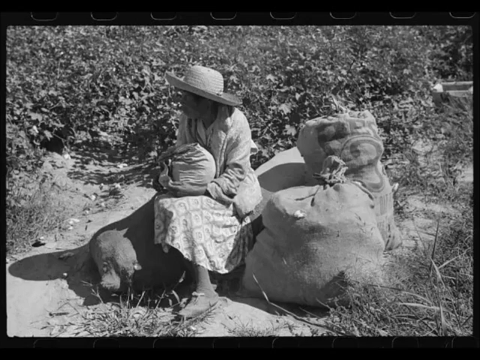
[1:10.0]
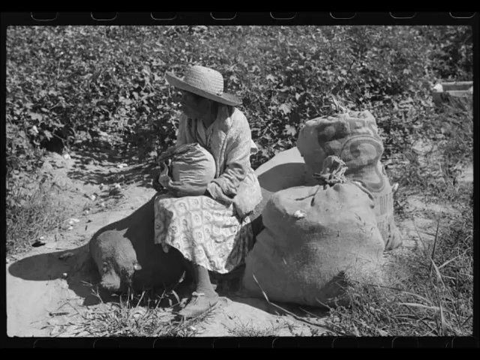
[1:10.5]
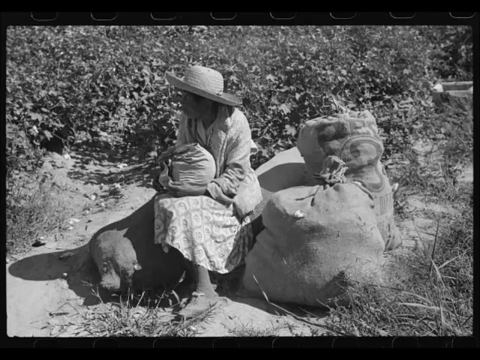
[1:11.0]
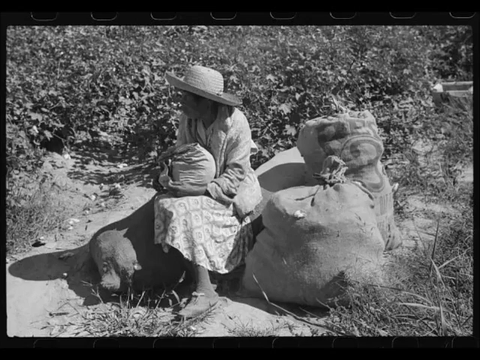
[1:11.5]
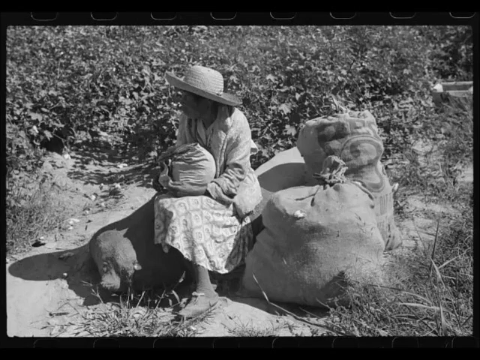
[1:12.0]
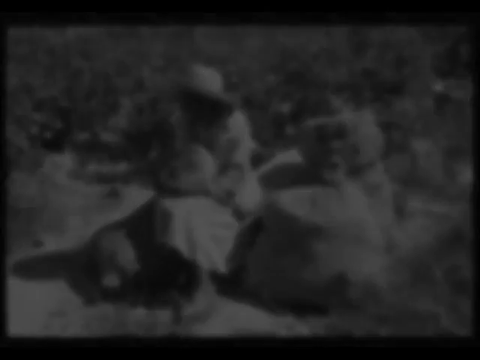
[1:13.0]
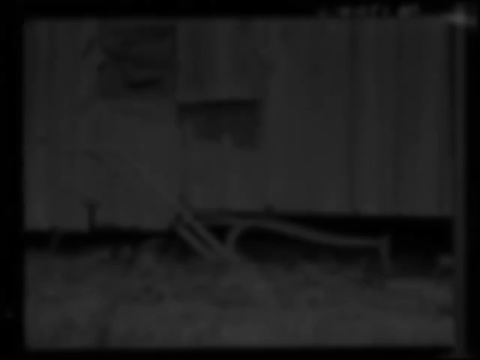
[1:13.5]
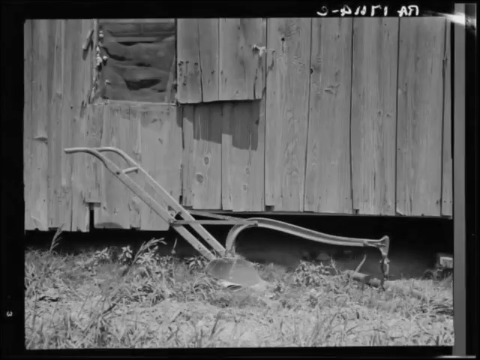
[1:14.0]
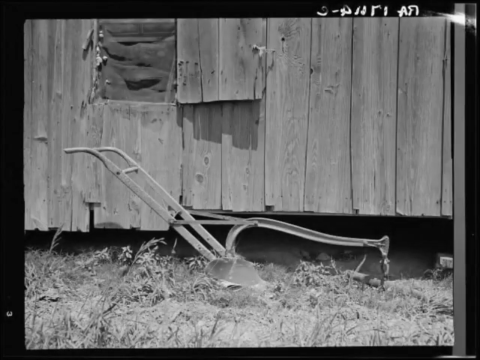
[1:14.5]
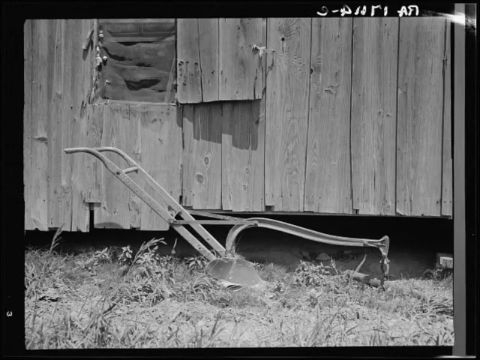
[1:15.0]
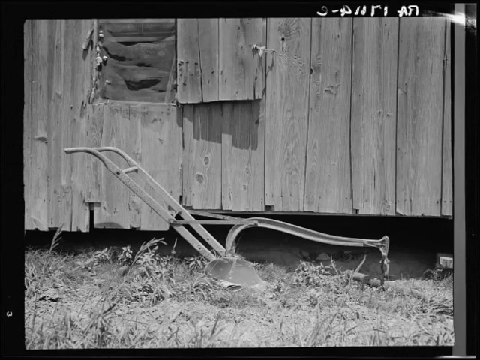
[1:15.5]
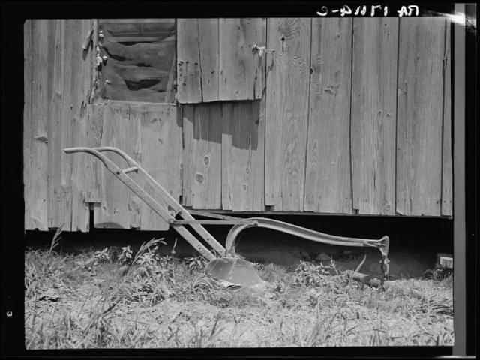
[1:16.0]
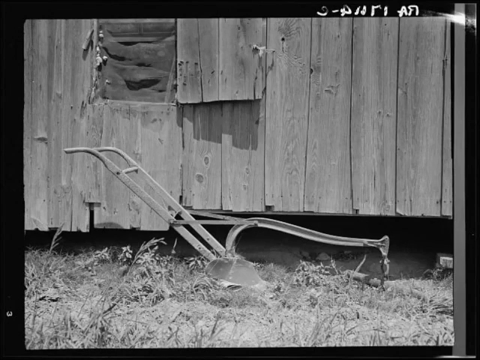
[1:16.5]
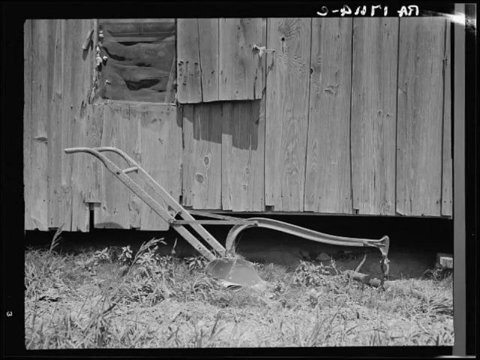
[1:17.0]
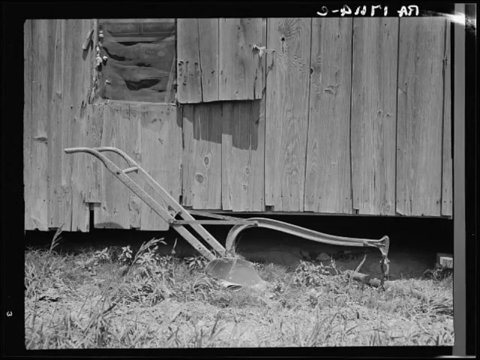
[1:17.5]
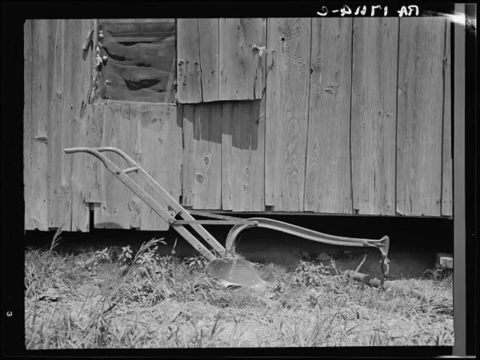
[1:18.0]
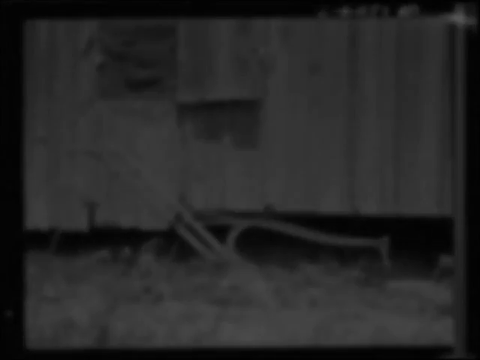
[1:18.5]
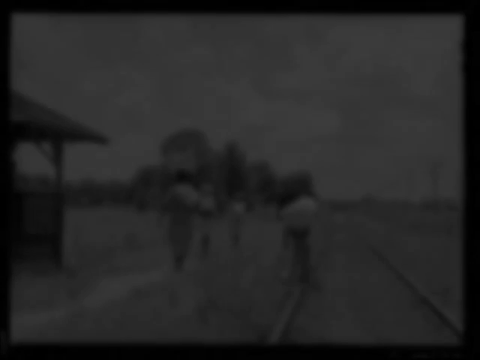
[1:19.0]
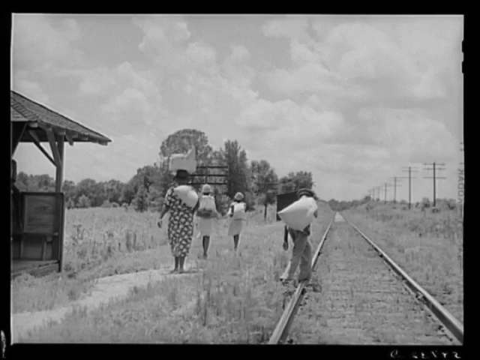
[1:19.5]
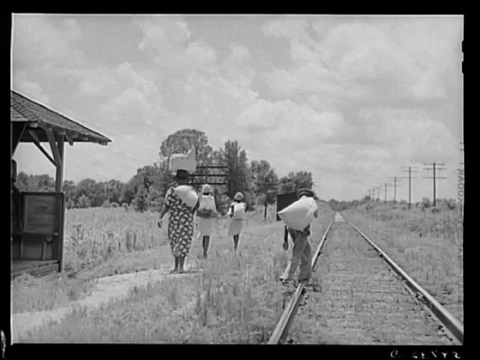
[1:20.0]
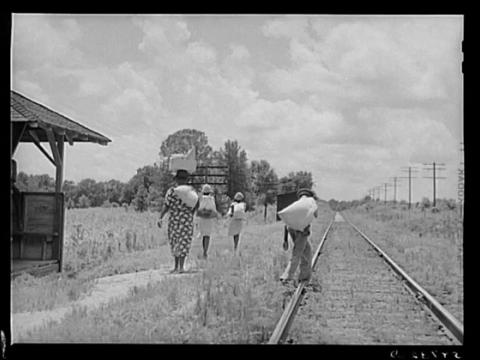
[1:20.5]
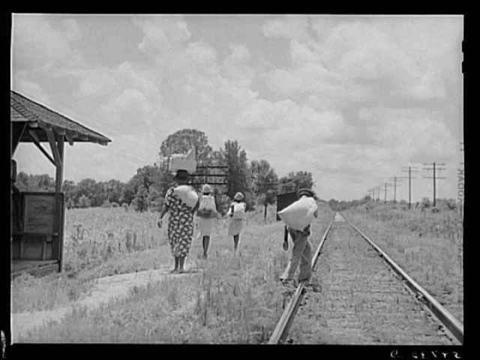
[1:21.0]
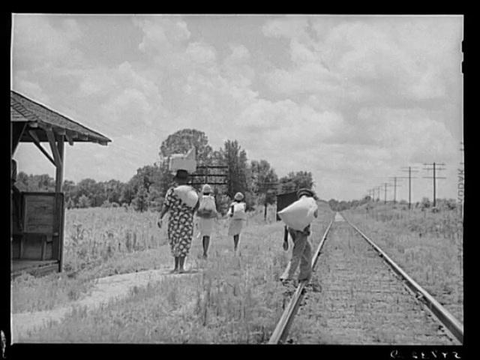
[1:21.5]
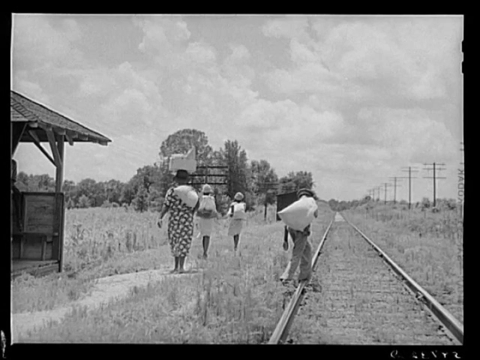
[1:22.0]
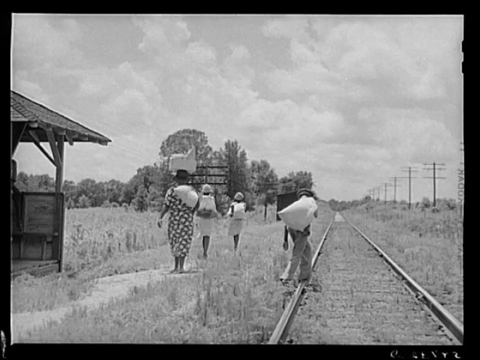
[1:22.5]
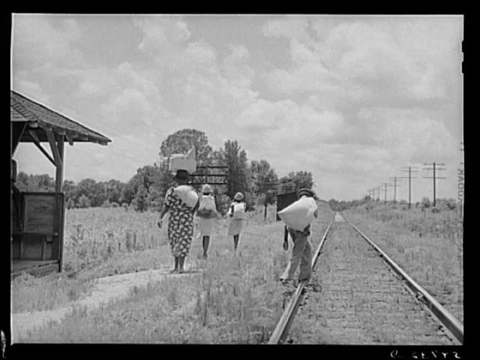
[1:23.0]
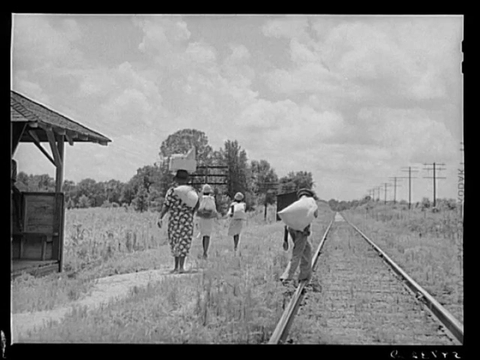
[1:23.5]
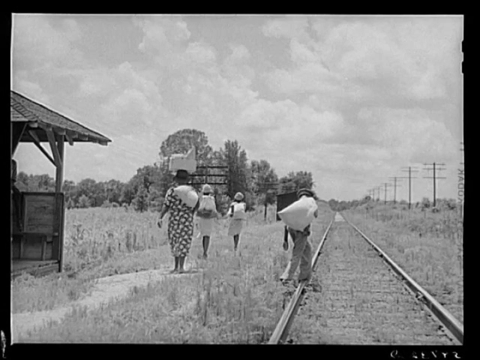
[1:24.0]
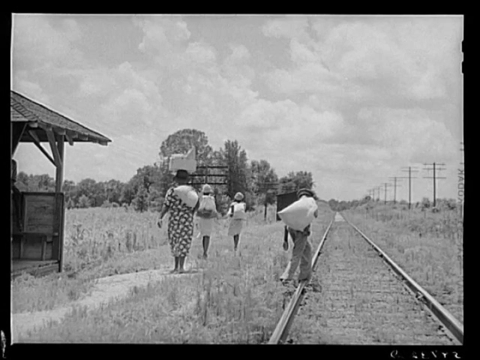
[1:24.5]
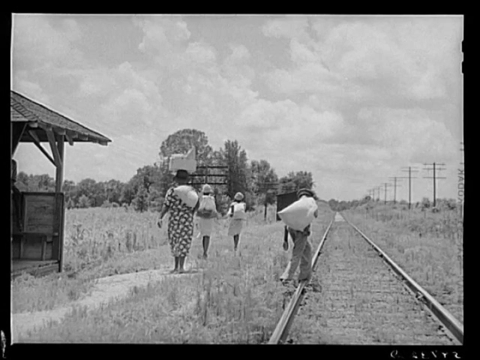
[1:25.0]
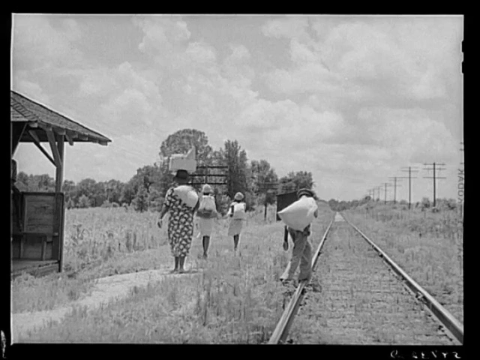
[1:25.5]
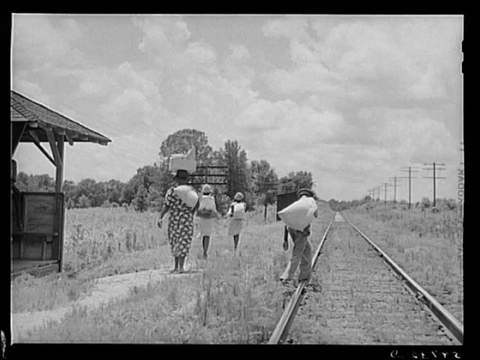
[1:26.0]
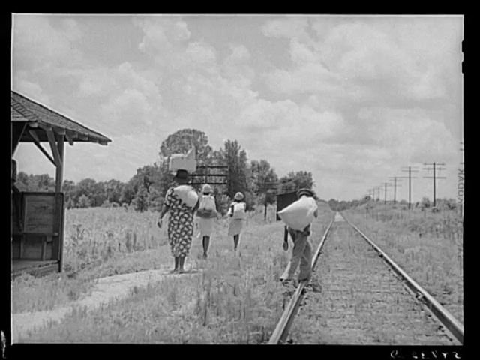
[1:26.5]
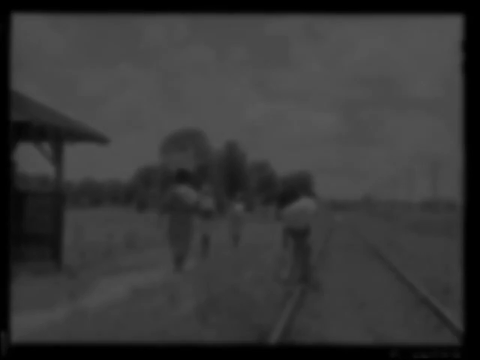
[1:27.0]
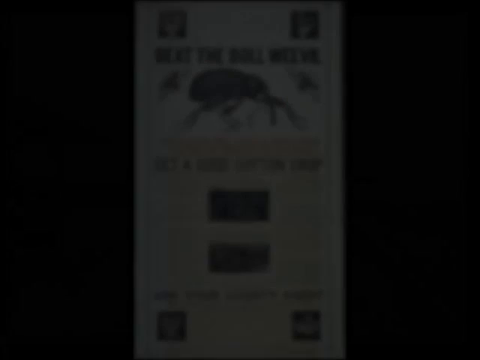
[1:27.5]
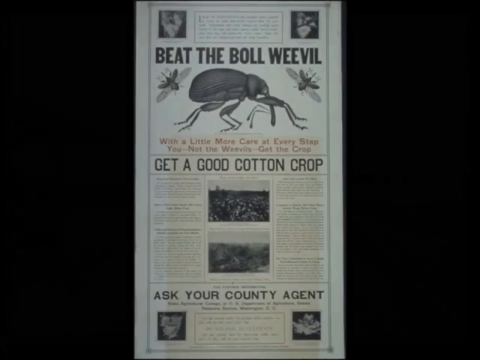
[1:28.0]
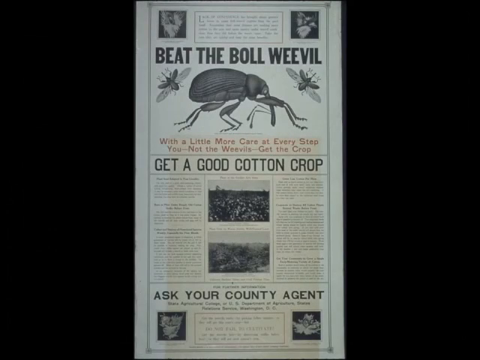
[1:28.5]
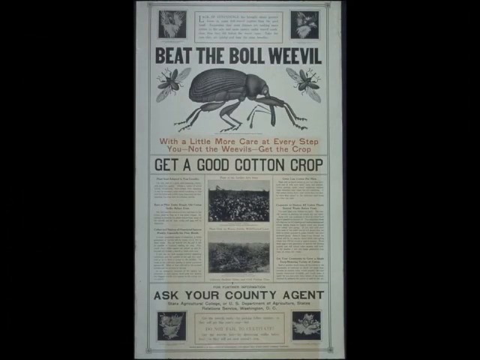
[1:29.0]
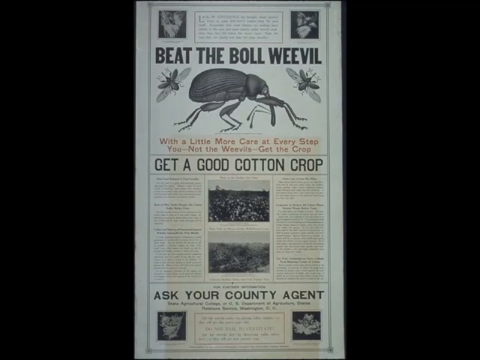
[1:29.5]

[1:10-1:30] The woman sitting on the sacks appears for just a second before the video cuts to a building with vertical wooden slats that looks pretty old by its design. A little in from the left at the top is a small window with some sort of cloth over it. The door is opened out to the right. There is a small gap between the floor and the dirt, then some grass, and in the grass is an old-school tiller with its handles to the left and its blade in the ground; a big metal piece comes up off the top of it and goes over to the right. The video cuts to railroad tracks on the right side of the image, with a row of power poles lined up in the distance on the right. A person, who appears to be a small child, steps on the left side of the rail carrying a white sack. About three feet to the left, three women walk with sacks on their backs along a little pathway worn in the grass. On the left side is something that almost looks like a little gazebo, with no walls but a roof on top and some of the floor visible. The video then cuts to a clipping with black bars on the left and right and white in between. At the top is the headline "beat the boll weevil," with a picture of an insect in the center and two more flying to its left and right, and another article underneath reads "get a good cotton crop."